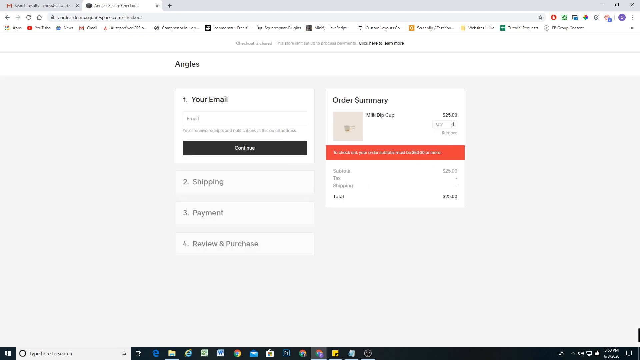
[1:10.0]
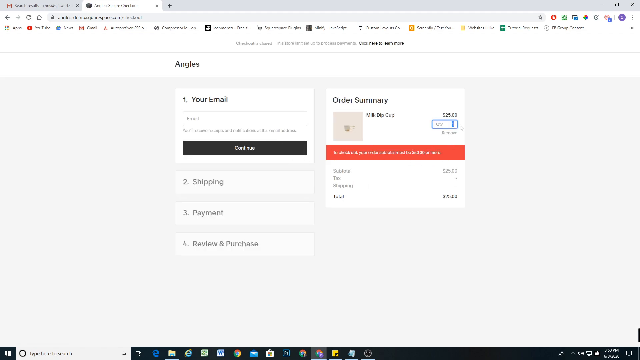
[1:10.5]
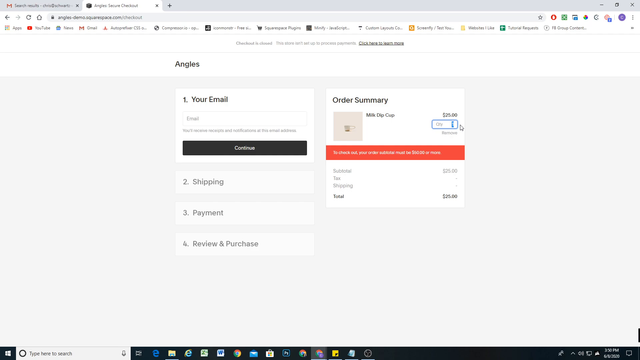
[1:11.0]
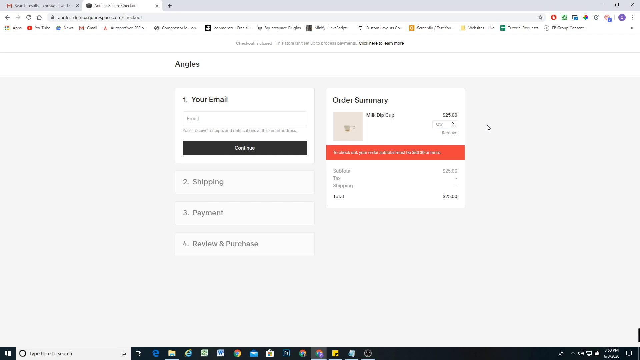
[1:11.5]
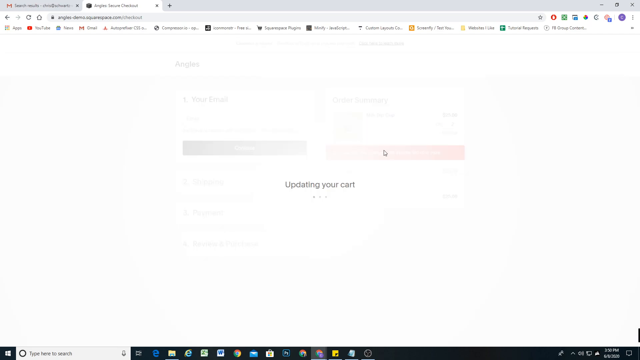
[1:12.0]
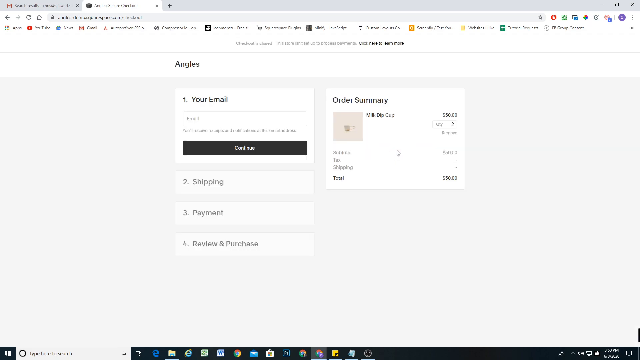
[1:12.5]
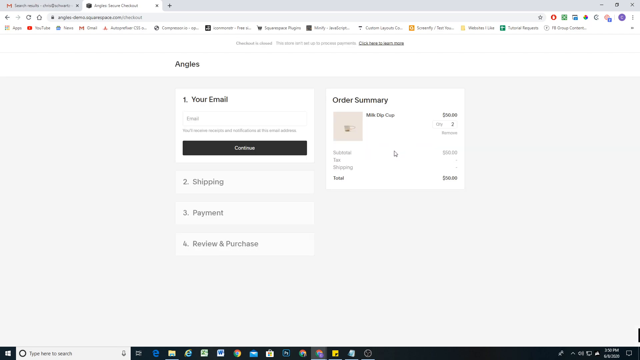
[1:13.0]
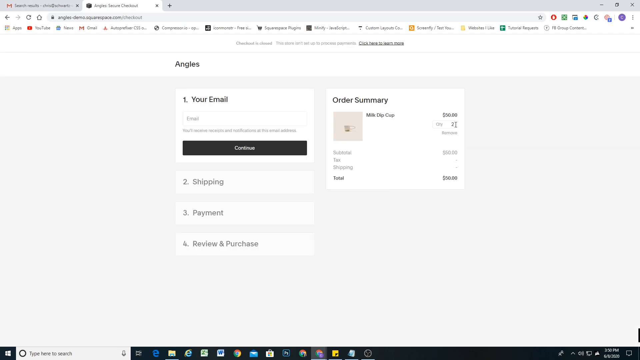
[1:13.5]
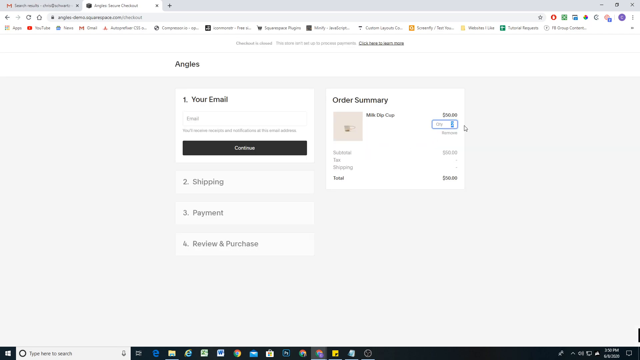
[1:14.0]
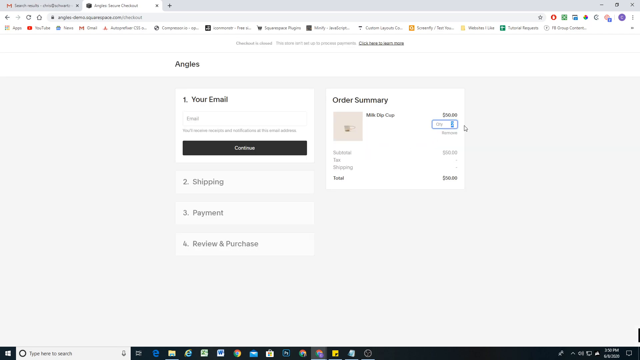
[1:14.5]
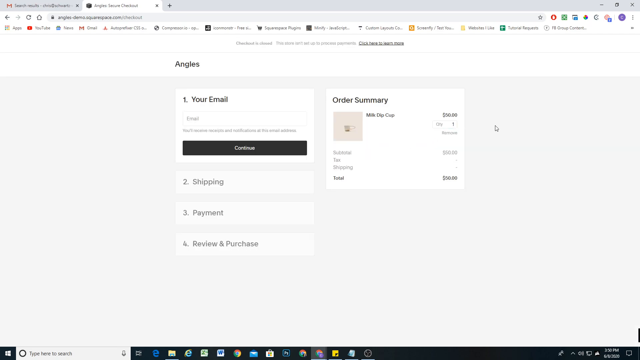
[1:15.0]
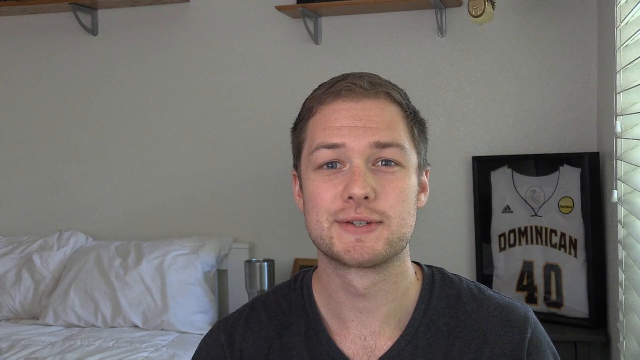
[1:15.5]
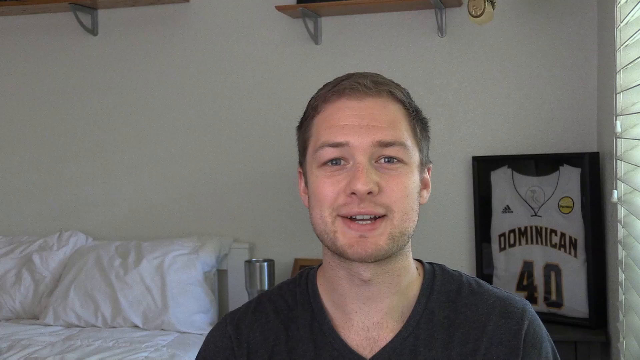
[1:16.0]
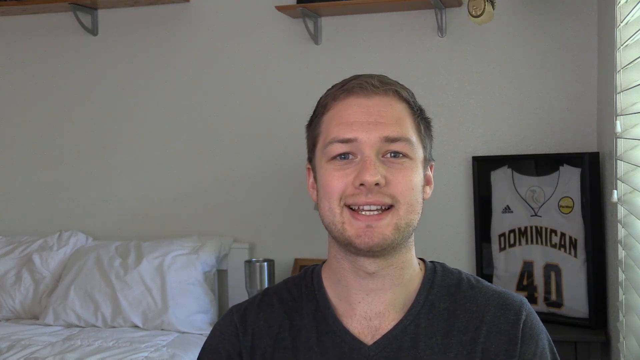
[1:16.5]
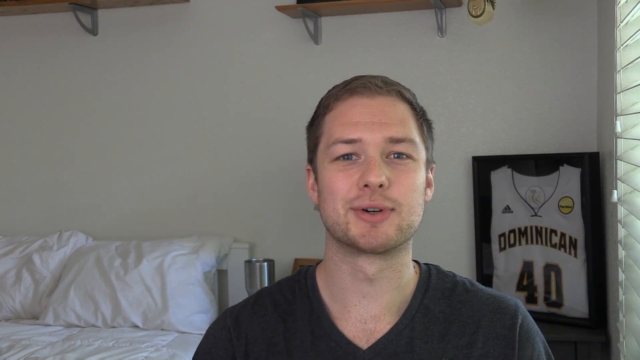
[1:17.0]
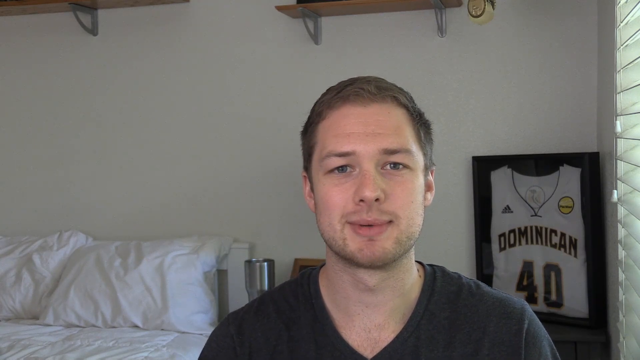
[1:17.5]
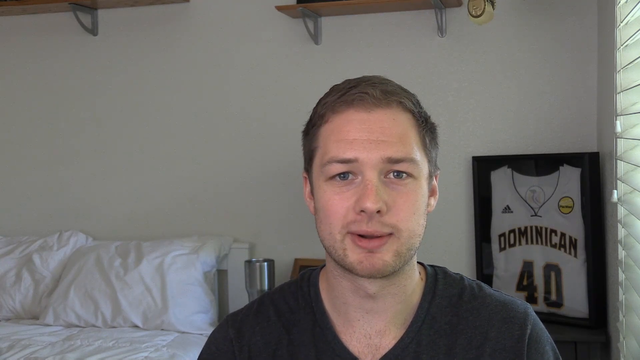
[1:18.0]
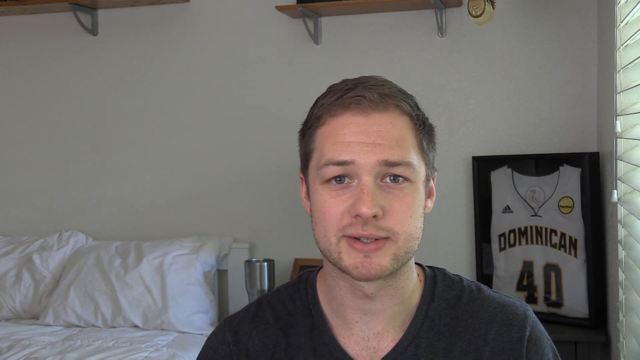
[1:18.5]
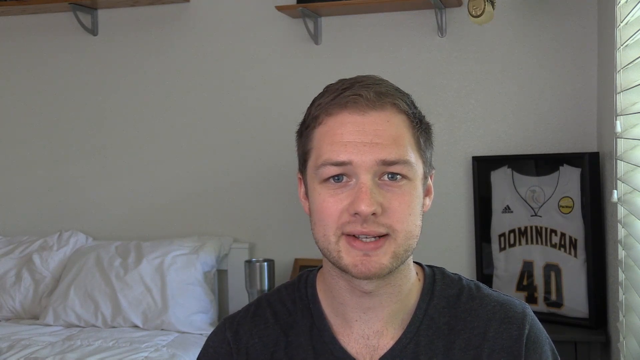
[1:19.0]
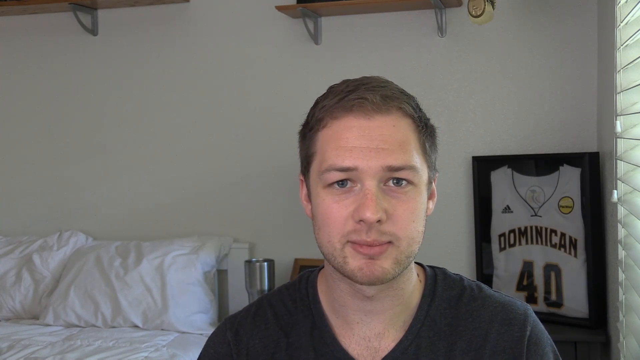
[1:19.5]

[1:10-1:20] On the Angles order summary, the mouse cursor is used to edit the quantity of the Milk Dip Cup. The quantity is highlighted, with a blue box over the number 1, and the number is changed from one to two. The video then cuts to a man talking to the camera in a bedroom. On the white wall hangs a white jersey reading "Dominican" with the number 40, and there is a black plaque on the back of the jersey. A shelf is on the wall closer to the ceiling. The man is Caucasian with short hair, a mustache and a beard, and wears a black shirt. He is standing in front of a bed with white pillows and a desk, which has a silver tumbler standing on top of it.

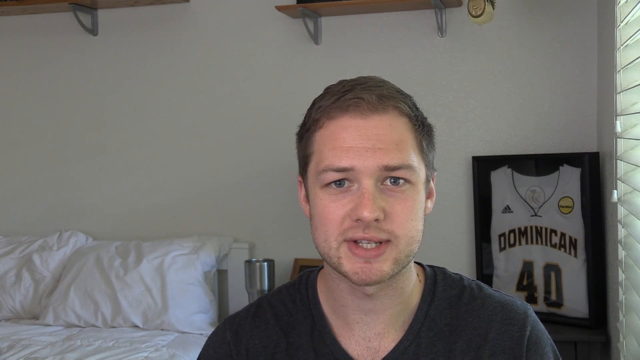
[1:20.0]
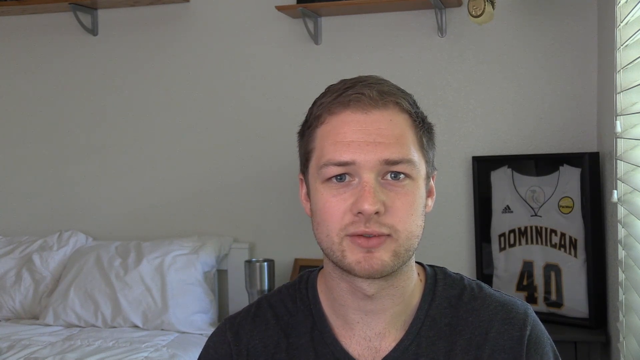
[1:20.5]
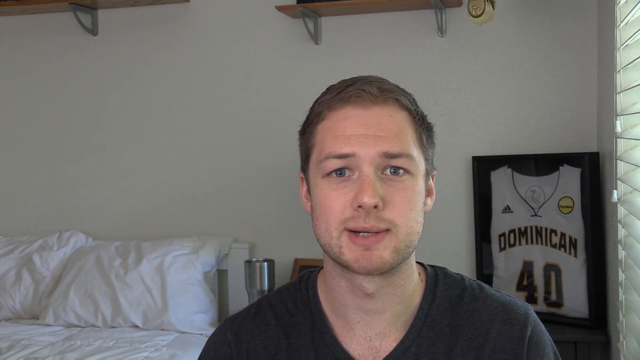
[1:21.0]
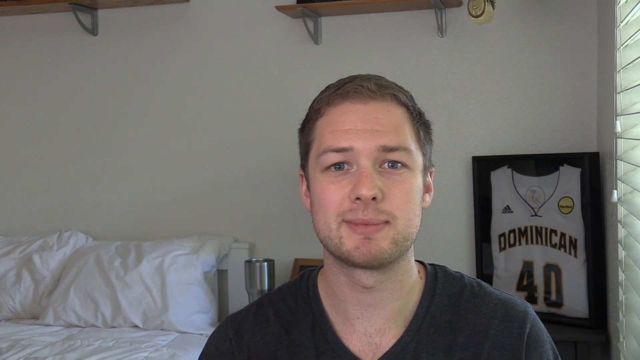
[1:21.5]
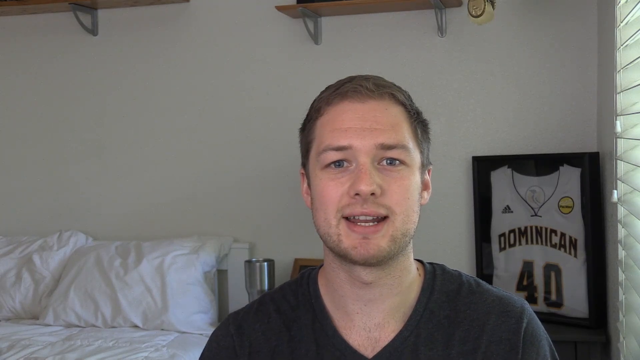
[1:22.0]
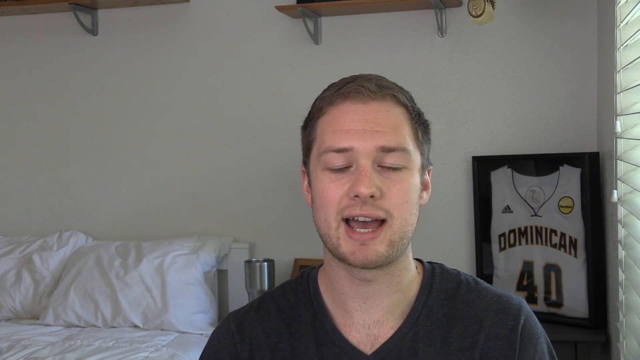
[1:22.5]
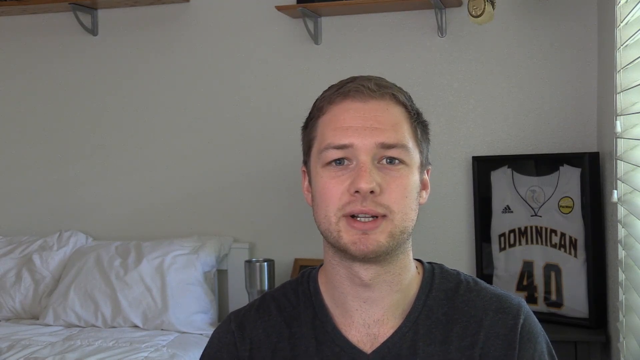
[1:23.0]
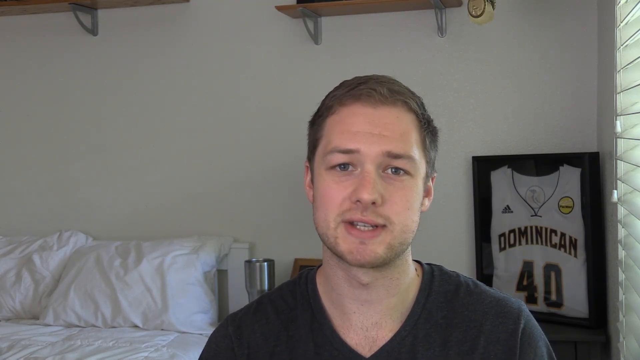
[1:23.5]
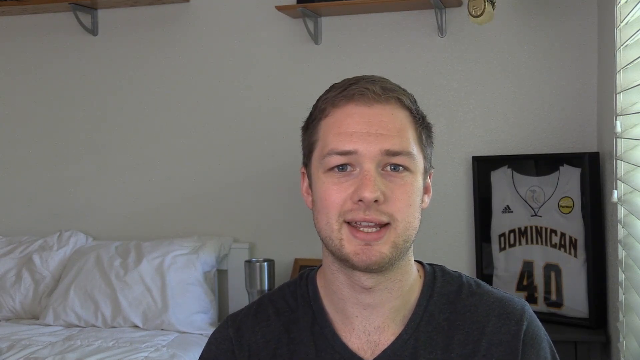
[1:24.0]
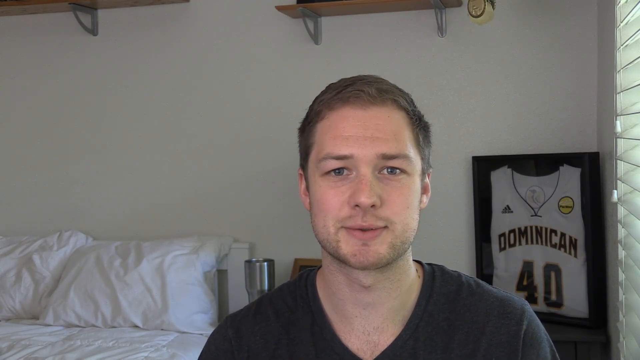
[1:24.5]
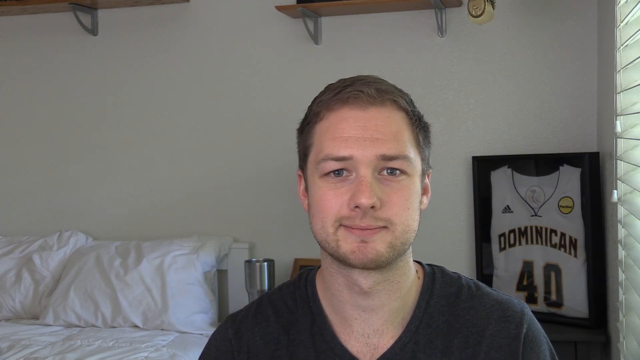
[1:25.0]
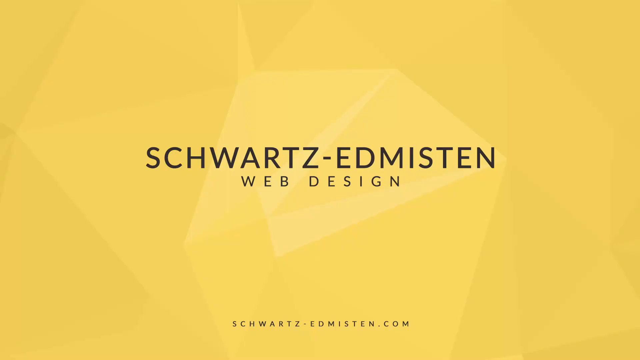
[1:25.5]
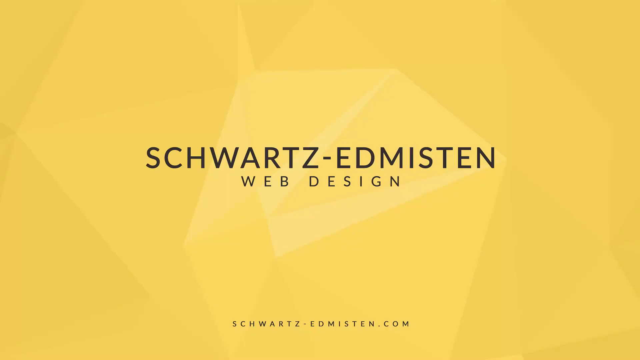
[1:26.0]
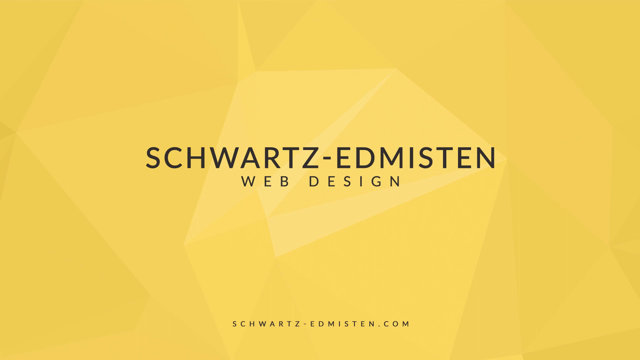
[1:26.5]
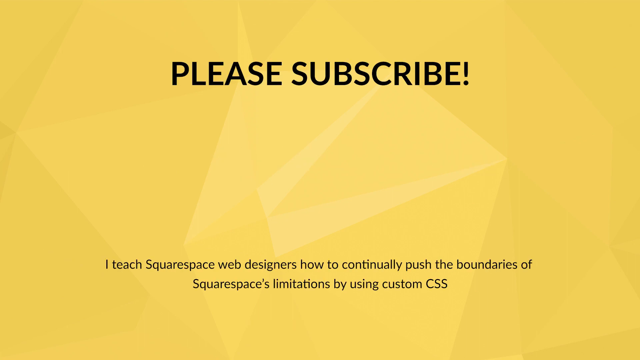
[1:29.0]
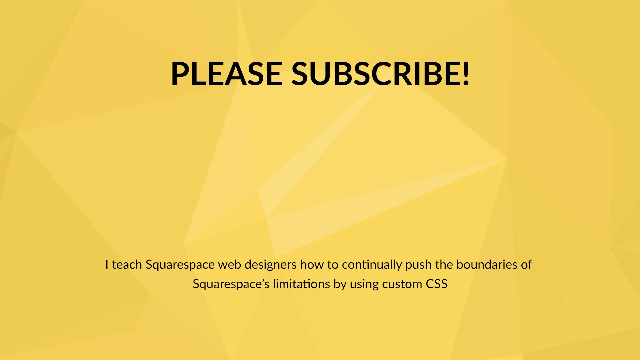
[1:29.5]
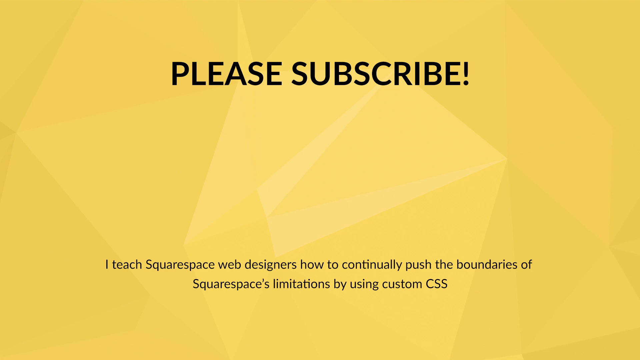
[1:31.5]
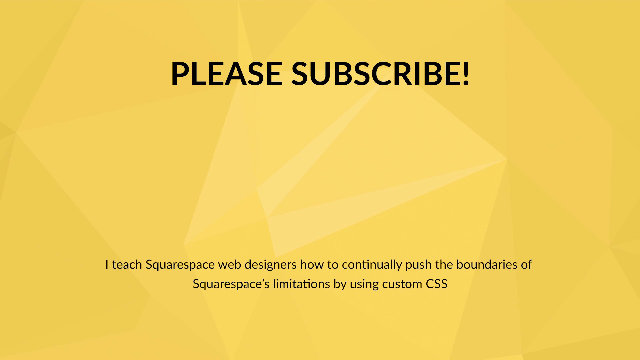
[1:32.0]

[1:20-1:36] The white man is in the middle of the screen, talking directly to the camera. He stands still, angles his head right and left, nods, and smiles. He blinks only once and maintains steady eye contact with the camera. The video then cuts to a yellow screen with a transparent diamond texture in the background. Black all-caps text reads "Schwarzen Edmundston Web Design," with "Web Design" in a very small font but still in all caps. At the very bottom of the screen is the company's website, "schwarzenedmundston.com." The text then changes to "please subscribe" in big bold letters at the top of the screen, and at the bottom is small fine print reading "I teach Squarespace web designers how to continually push the boundaries of Squarespace limitations by using custom CSS."